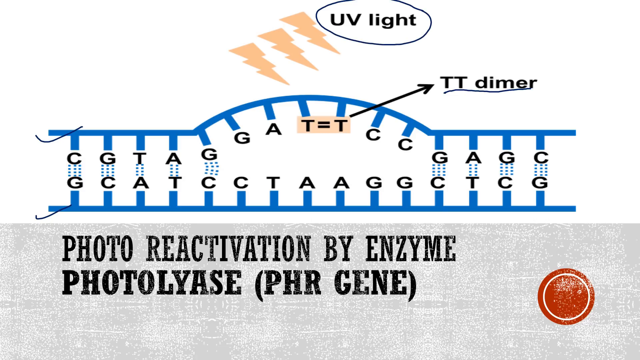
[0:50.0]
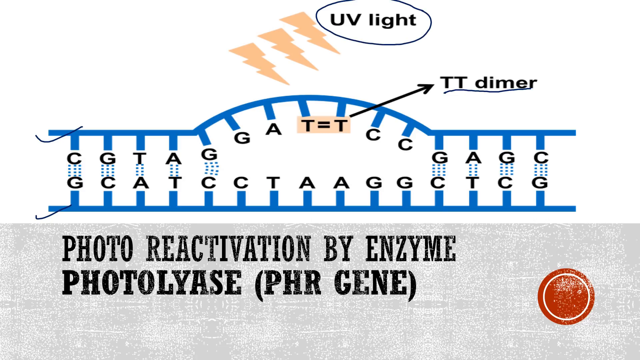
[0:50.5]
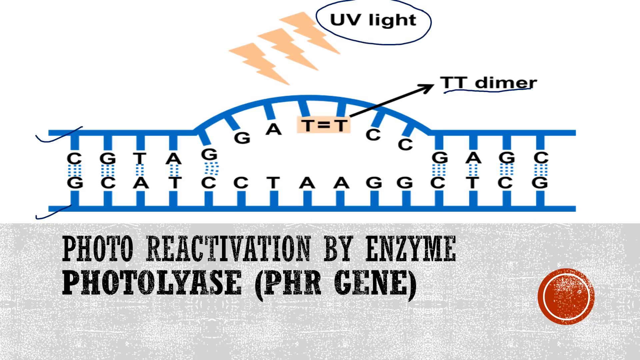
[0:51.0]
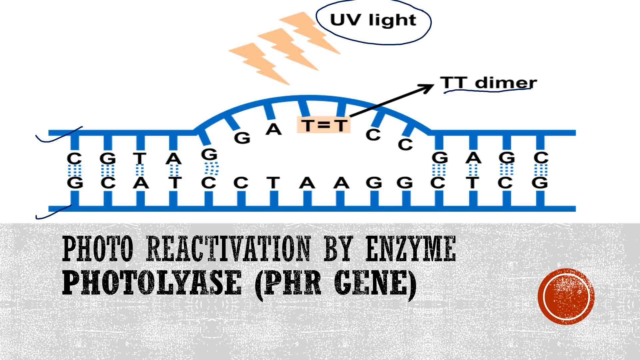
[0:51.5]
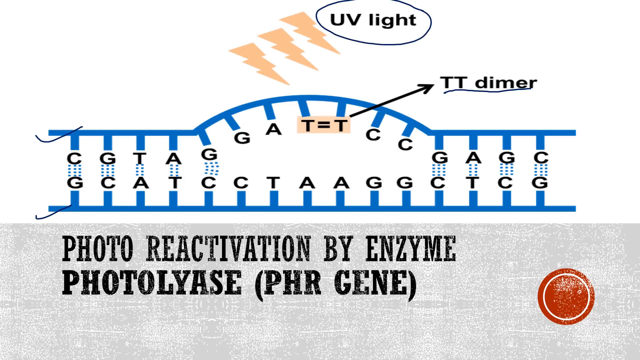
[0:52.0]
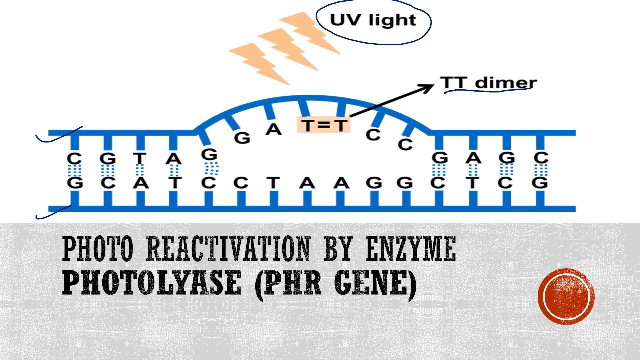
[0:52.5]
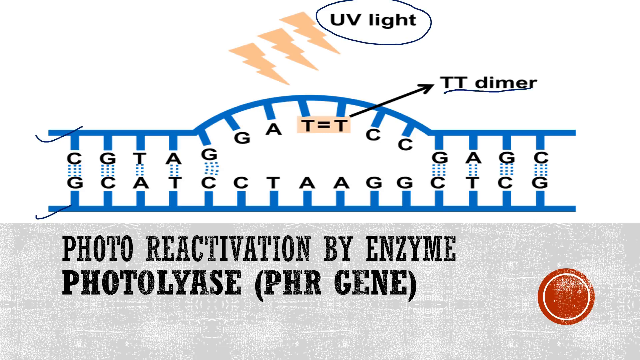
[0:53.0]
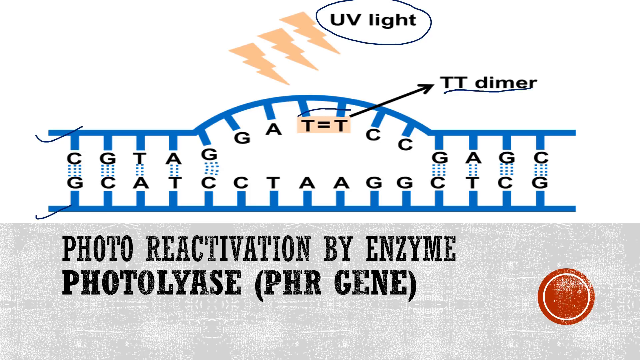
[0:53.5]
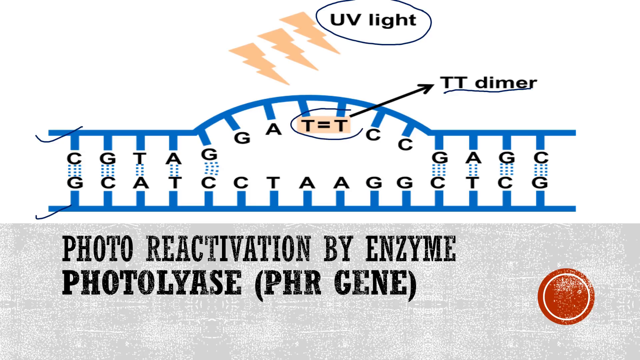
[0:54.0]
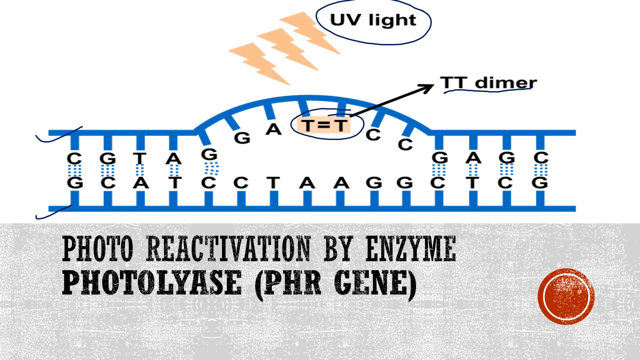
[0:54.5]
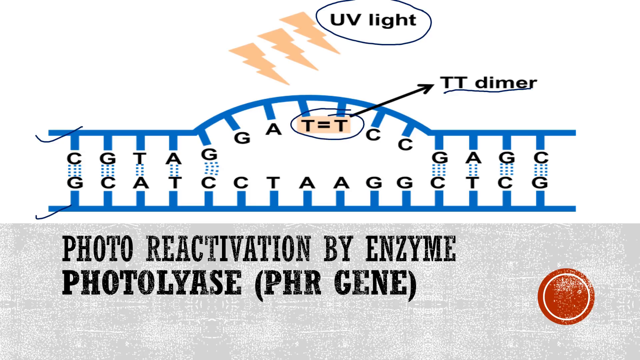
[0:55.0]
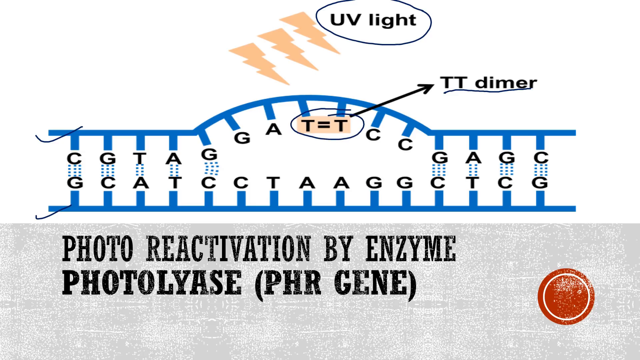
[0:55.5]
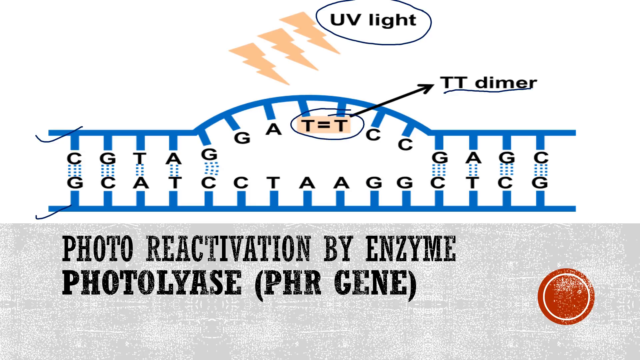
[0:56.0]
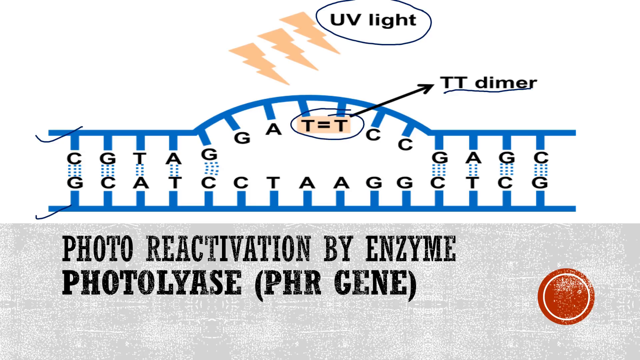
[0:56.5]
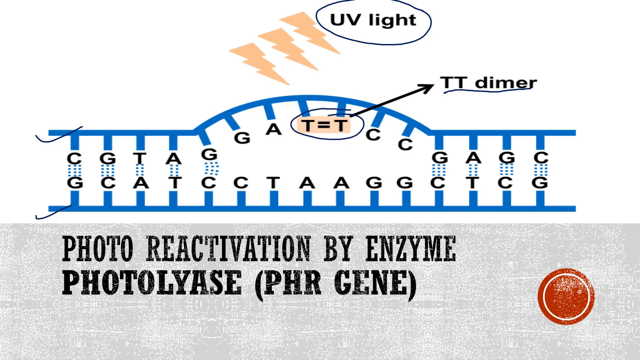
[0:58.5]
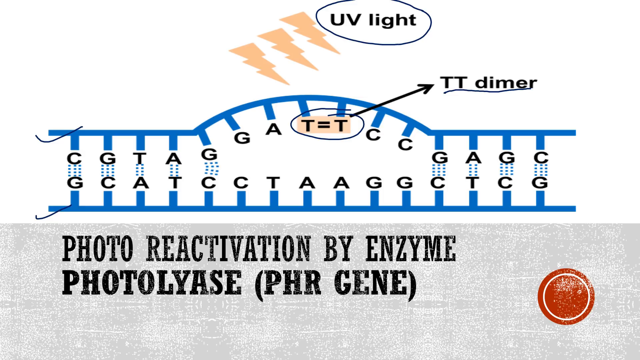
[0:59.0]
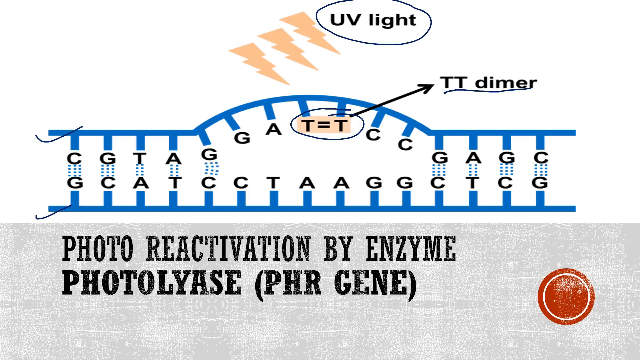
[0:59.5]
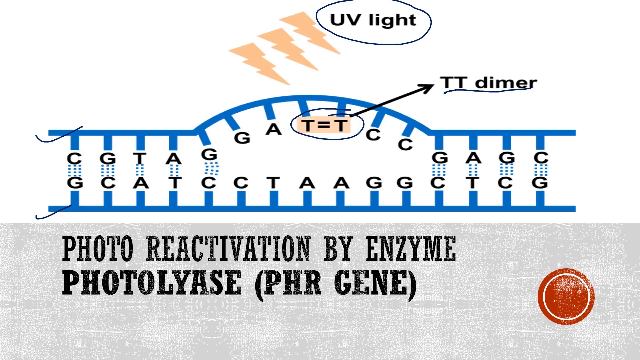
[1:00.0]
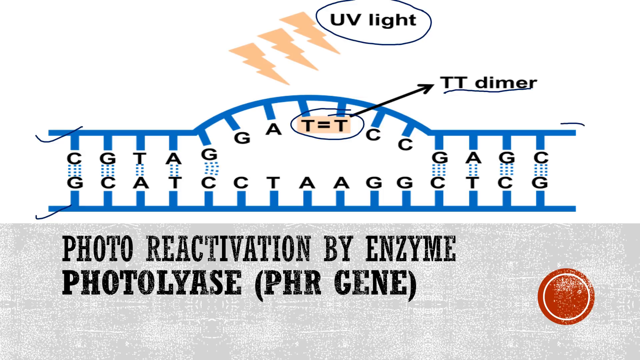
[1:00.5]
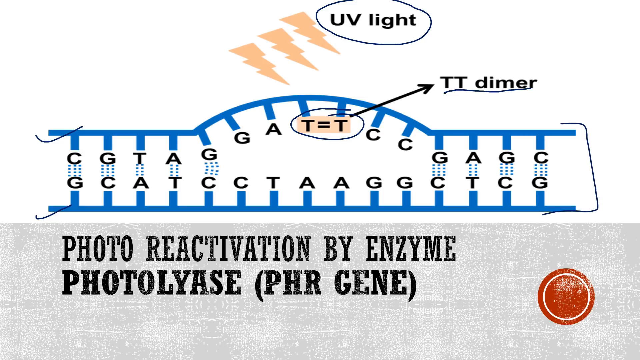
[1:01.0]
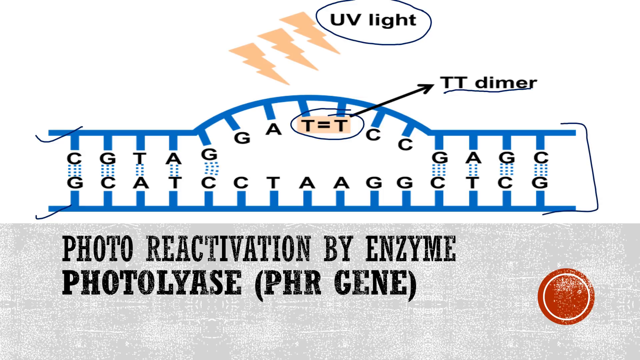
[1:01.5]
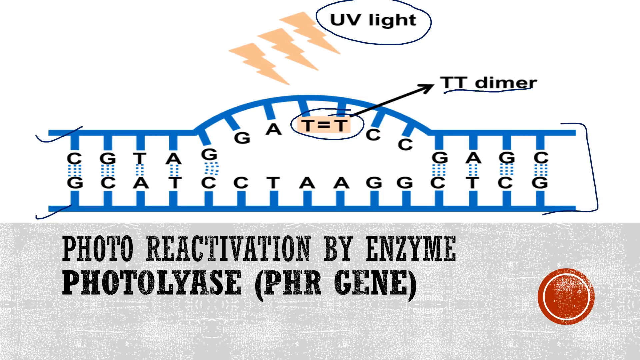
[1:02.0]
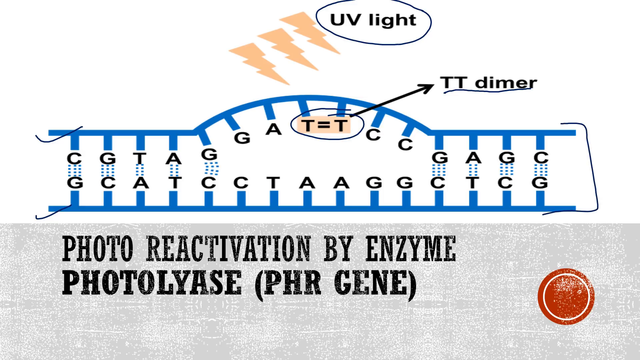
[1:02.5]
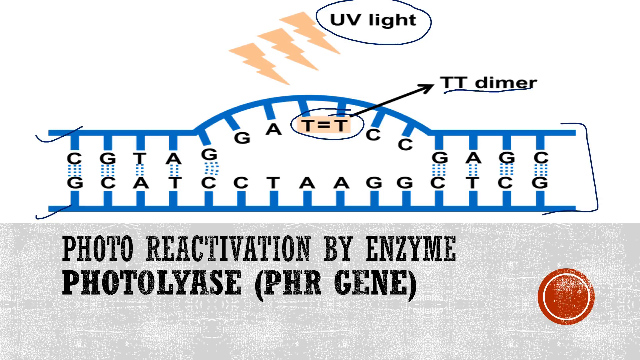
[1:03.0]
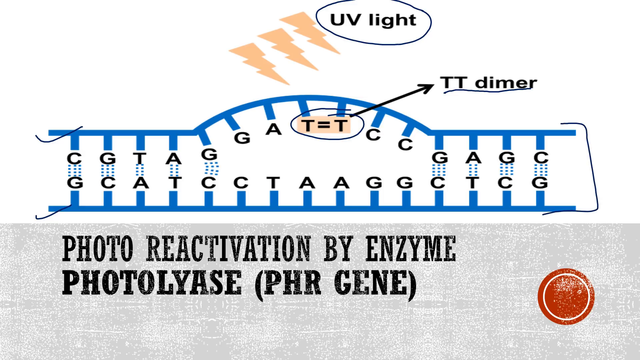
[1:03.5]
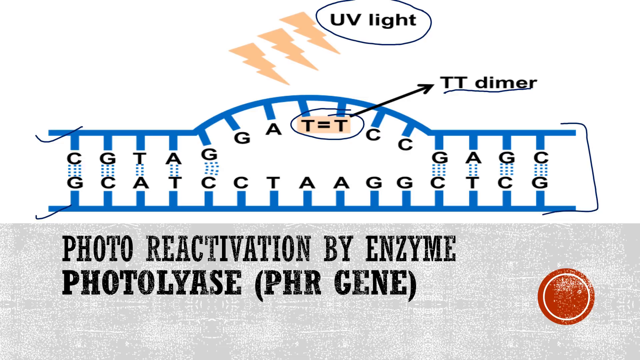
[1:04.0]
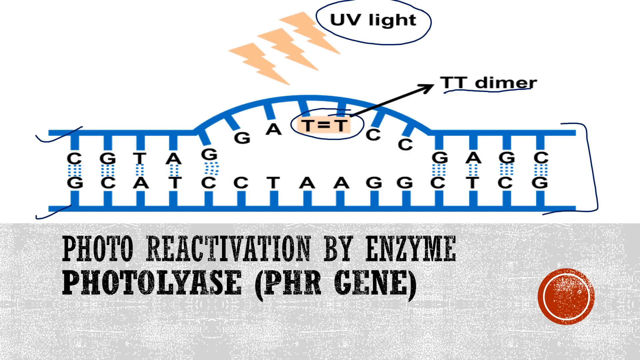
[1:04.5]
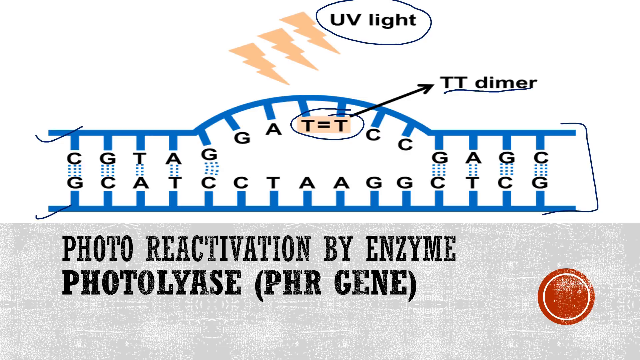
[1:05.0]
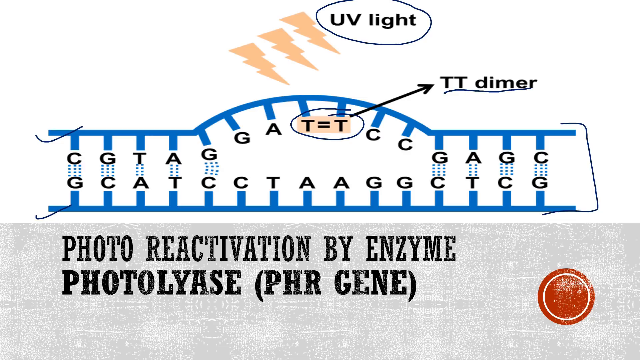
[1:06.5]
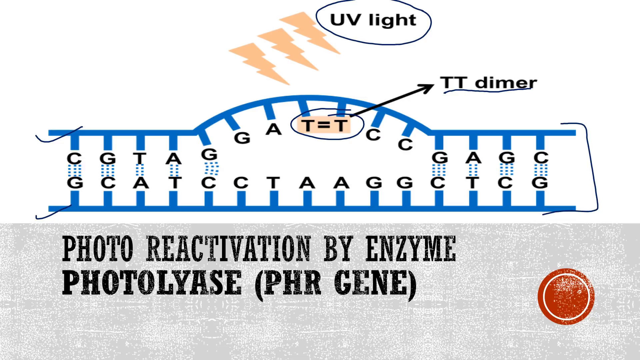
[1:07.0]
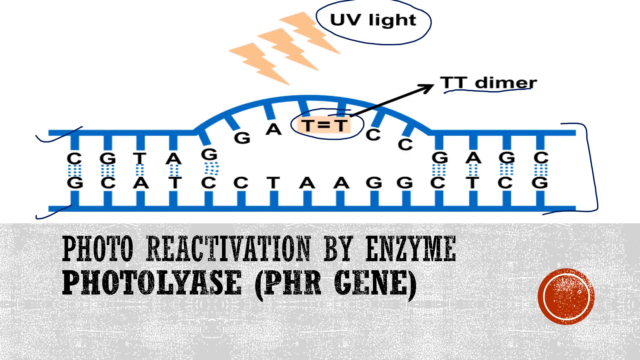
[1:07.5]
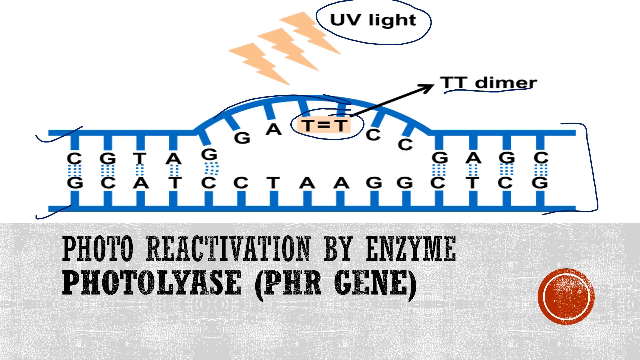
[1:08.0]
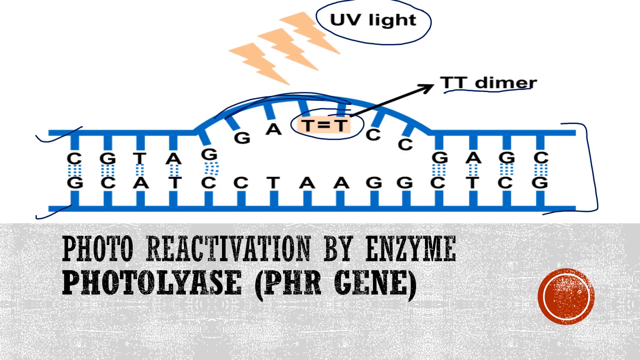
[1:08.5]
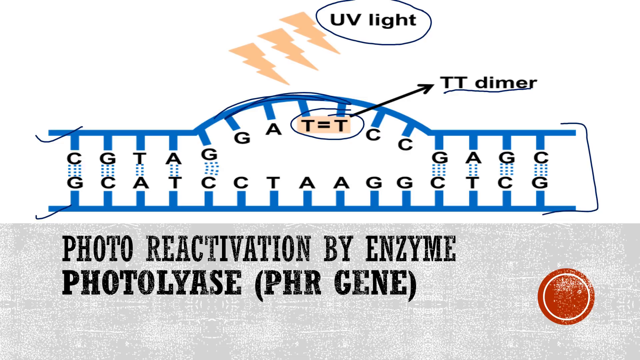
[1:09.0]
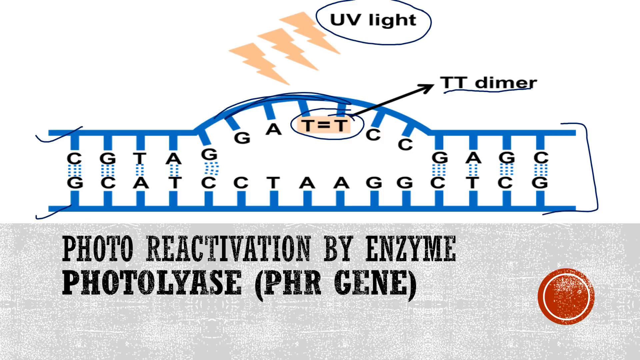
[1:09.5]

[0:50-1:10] A cartoon diagram shows photoreactivation on a DNA strand, with a specific area where a dimer is created. Several parts of the cartoon point toward the sequence where the dimer forms, and there is a button at the bottom right-hand side of the cartoon.